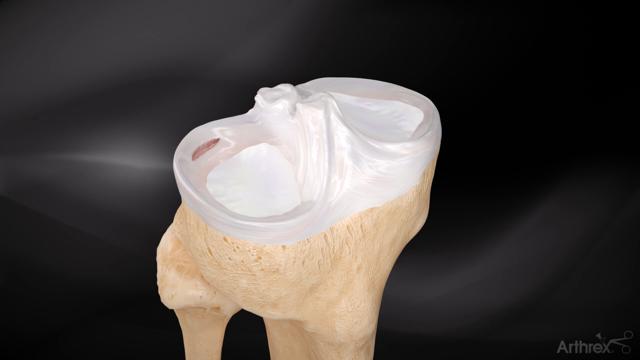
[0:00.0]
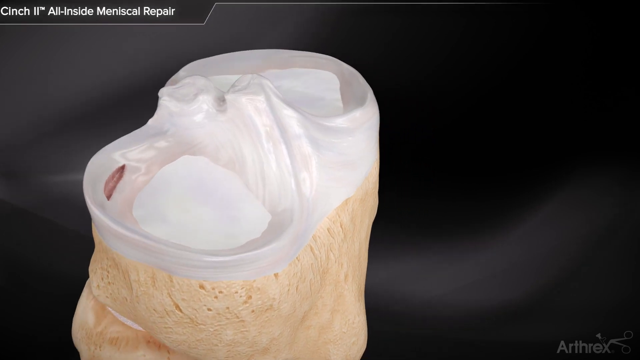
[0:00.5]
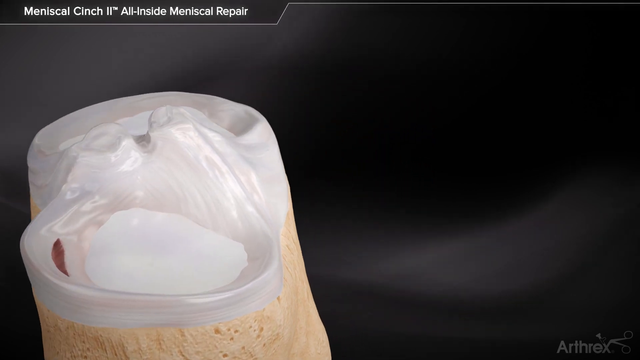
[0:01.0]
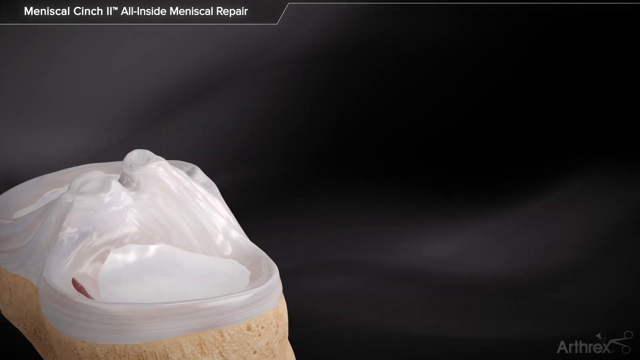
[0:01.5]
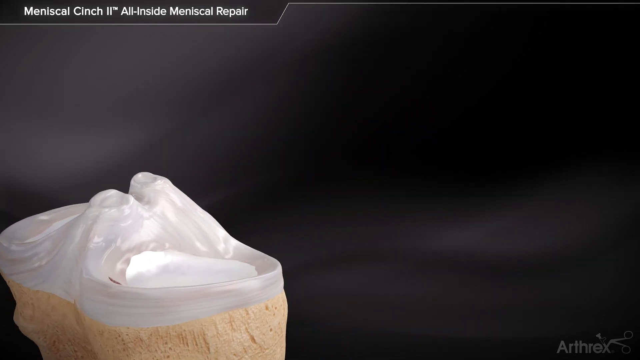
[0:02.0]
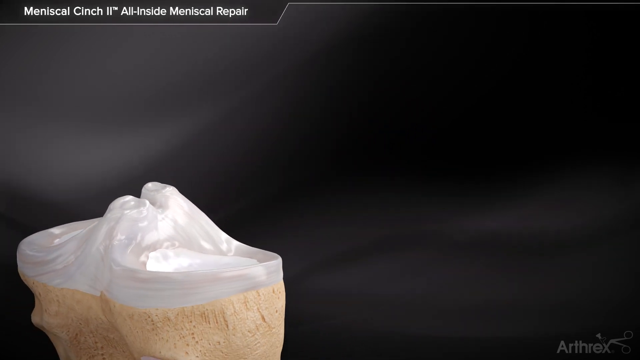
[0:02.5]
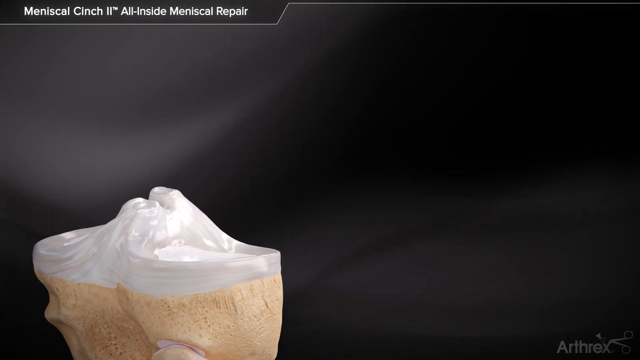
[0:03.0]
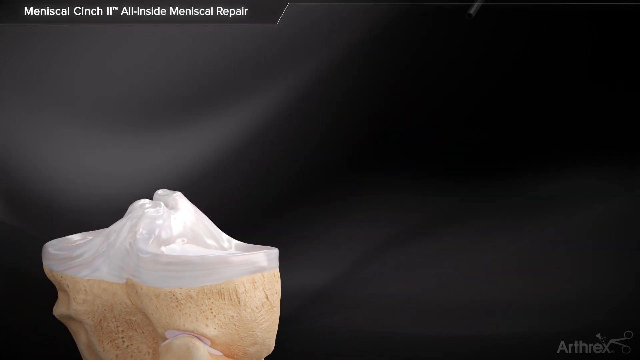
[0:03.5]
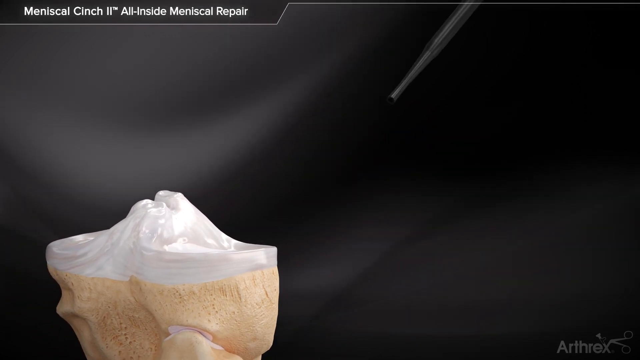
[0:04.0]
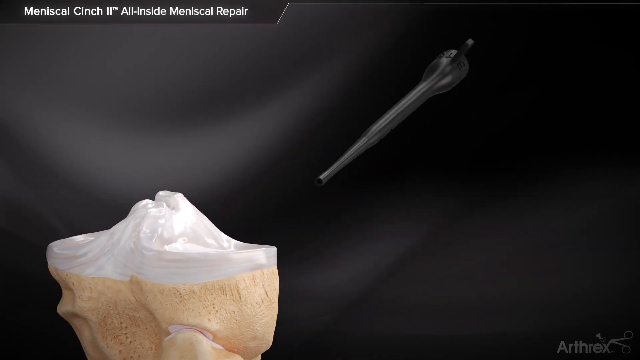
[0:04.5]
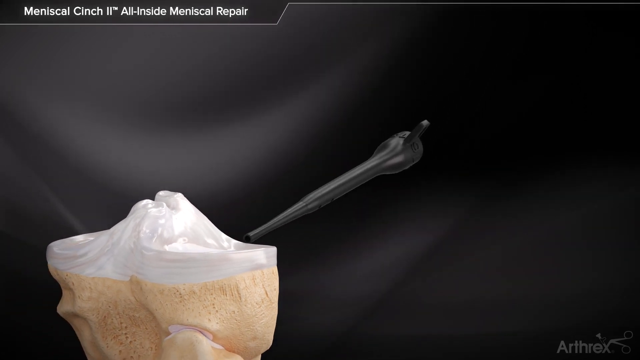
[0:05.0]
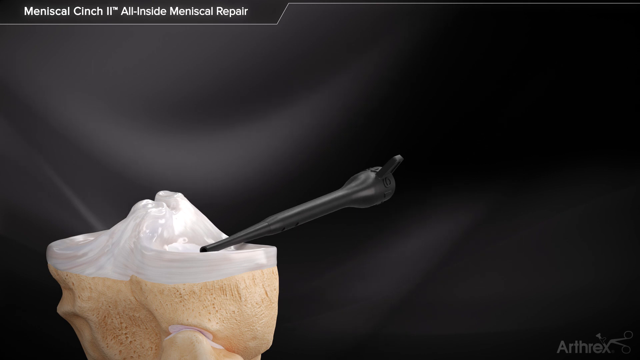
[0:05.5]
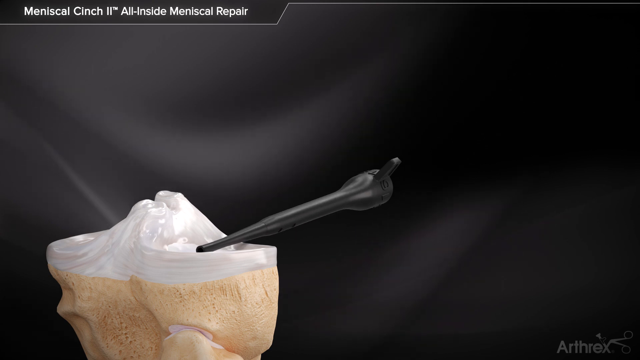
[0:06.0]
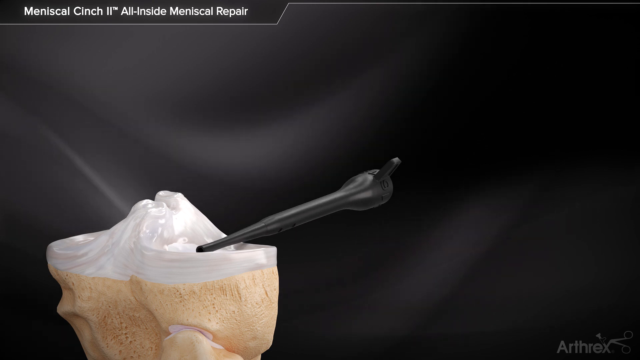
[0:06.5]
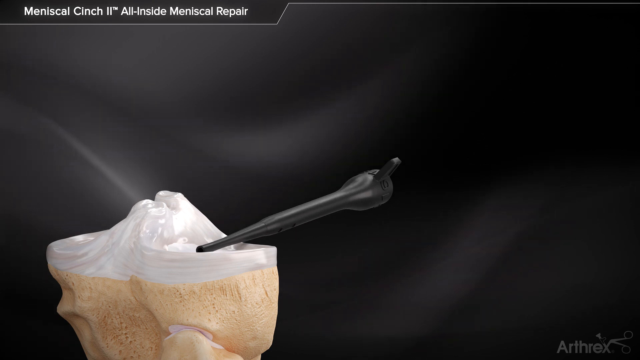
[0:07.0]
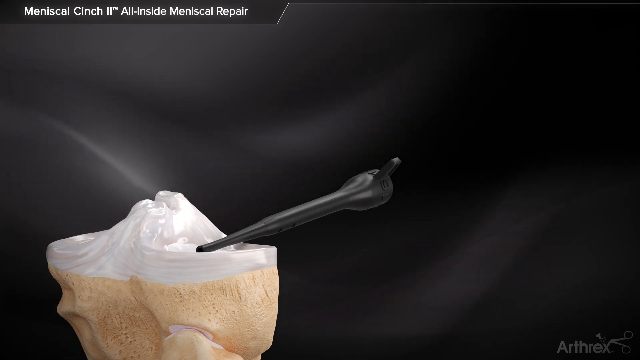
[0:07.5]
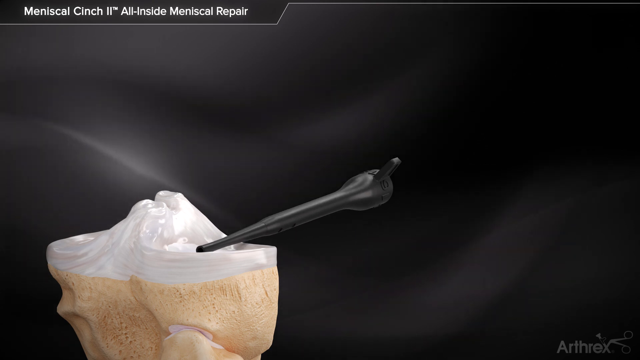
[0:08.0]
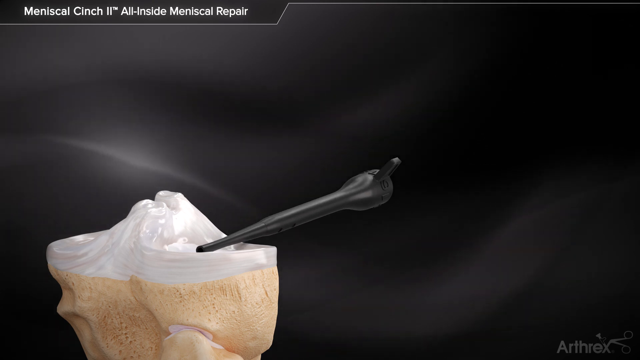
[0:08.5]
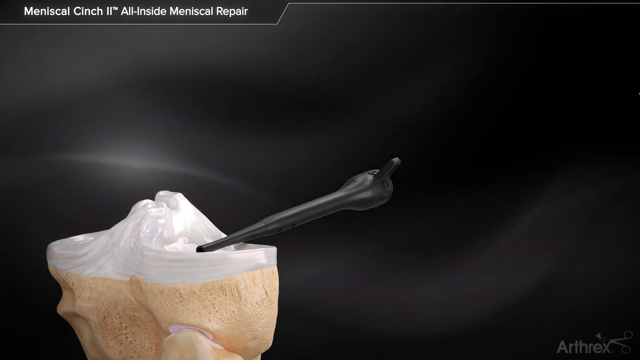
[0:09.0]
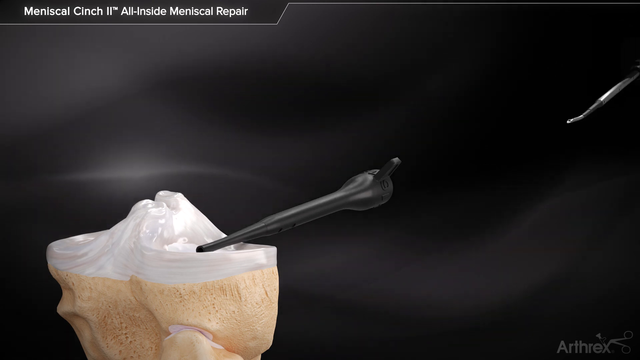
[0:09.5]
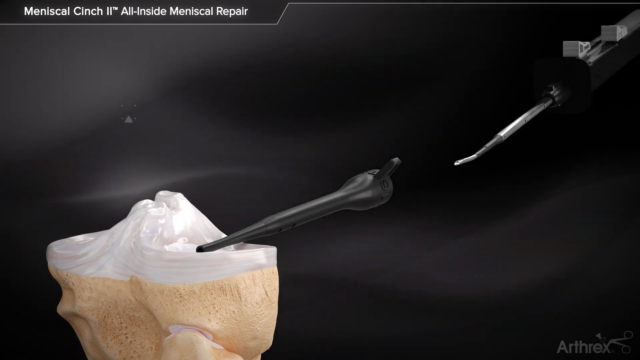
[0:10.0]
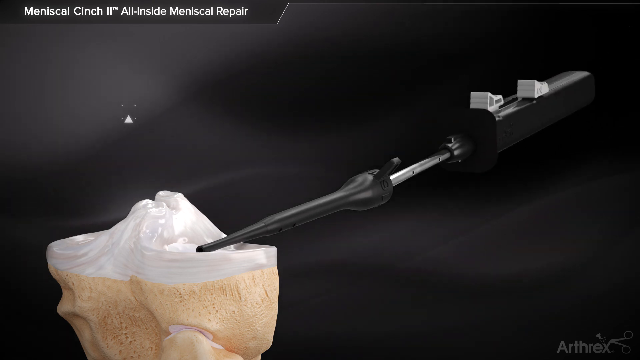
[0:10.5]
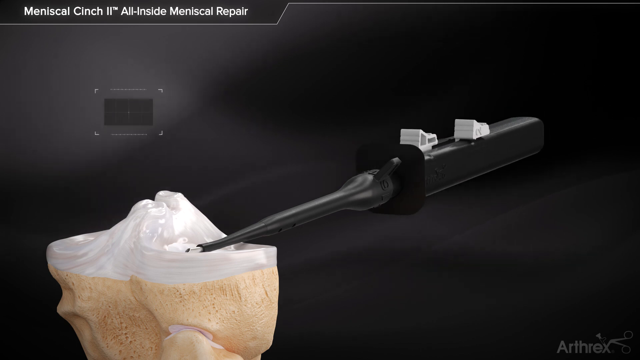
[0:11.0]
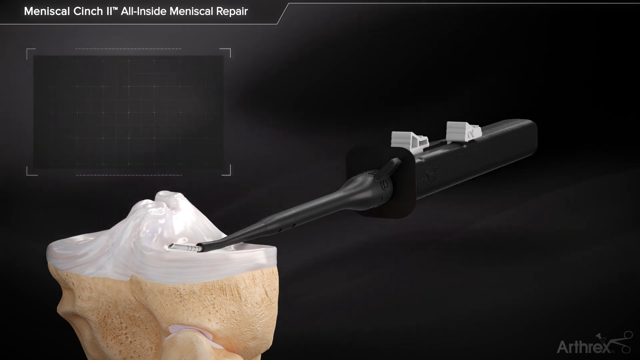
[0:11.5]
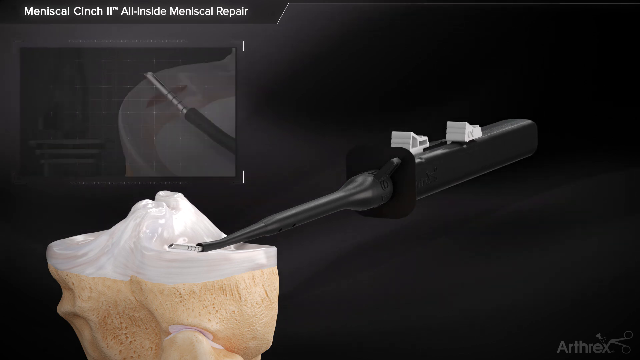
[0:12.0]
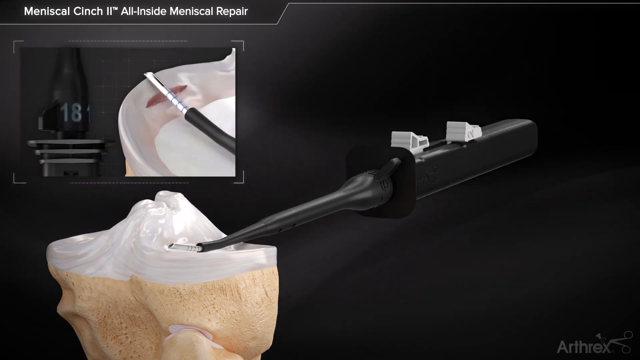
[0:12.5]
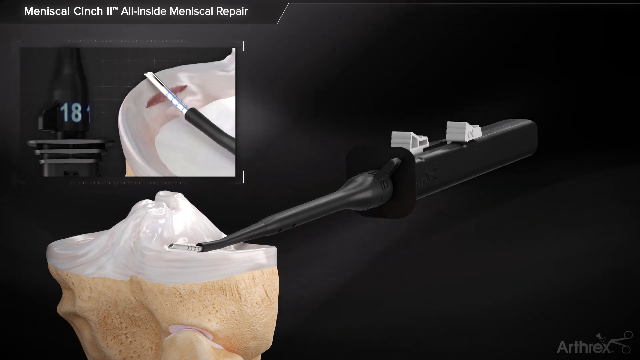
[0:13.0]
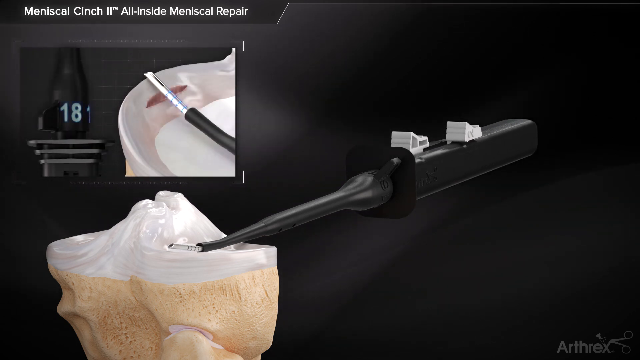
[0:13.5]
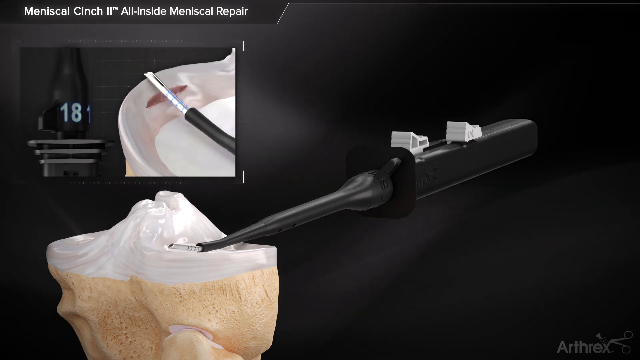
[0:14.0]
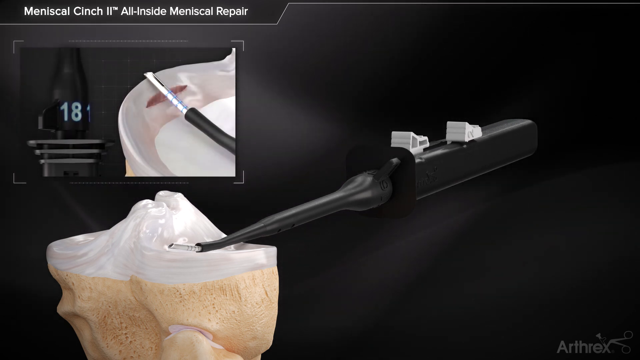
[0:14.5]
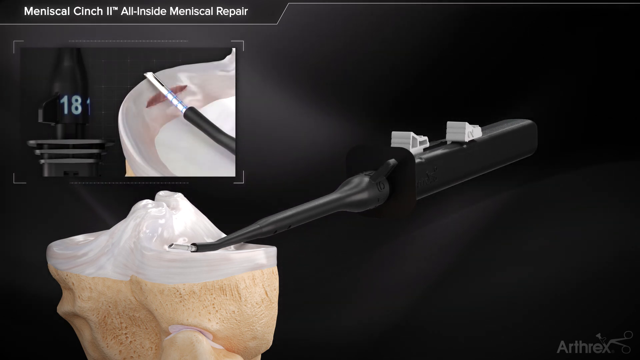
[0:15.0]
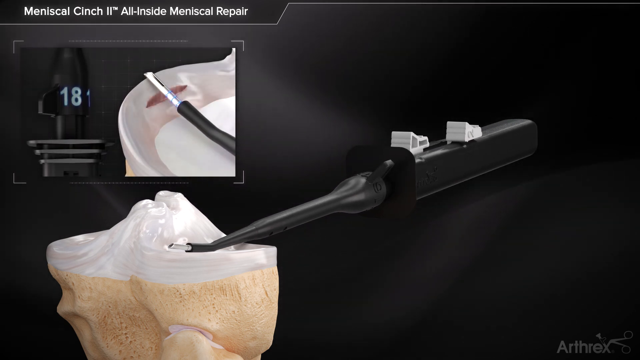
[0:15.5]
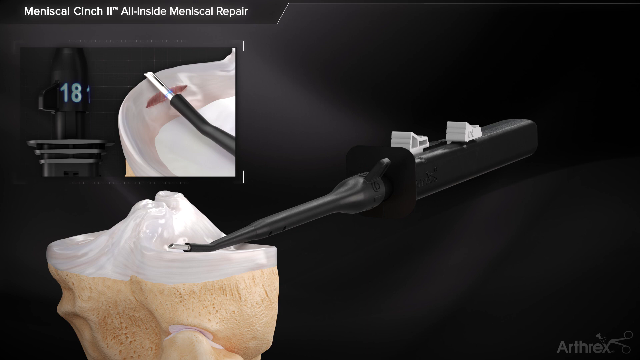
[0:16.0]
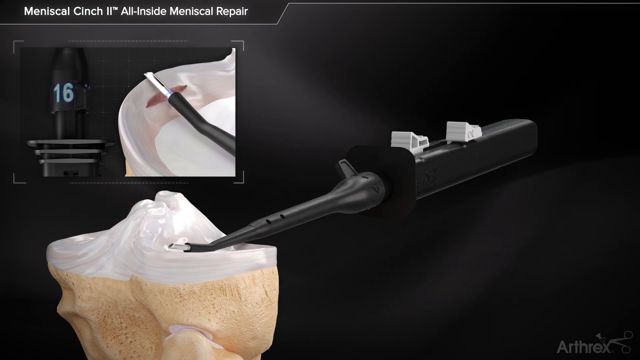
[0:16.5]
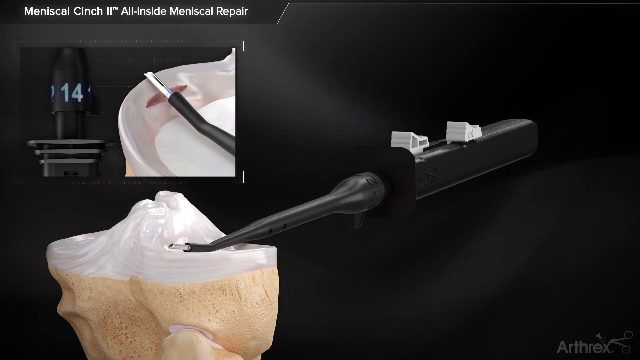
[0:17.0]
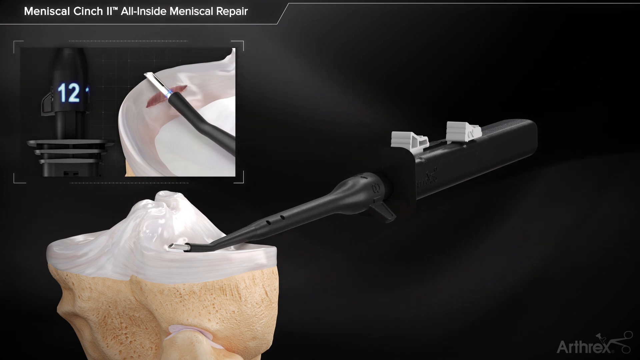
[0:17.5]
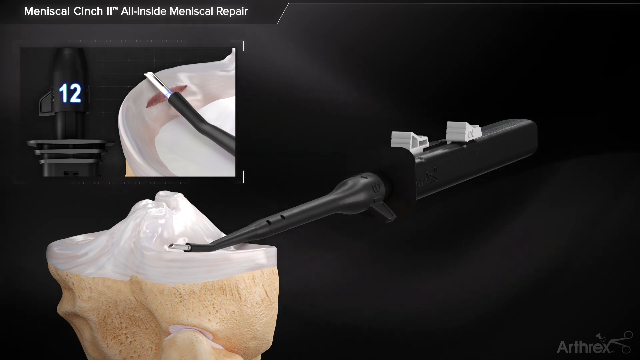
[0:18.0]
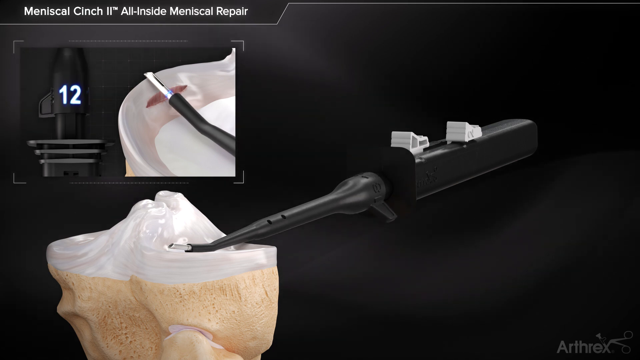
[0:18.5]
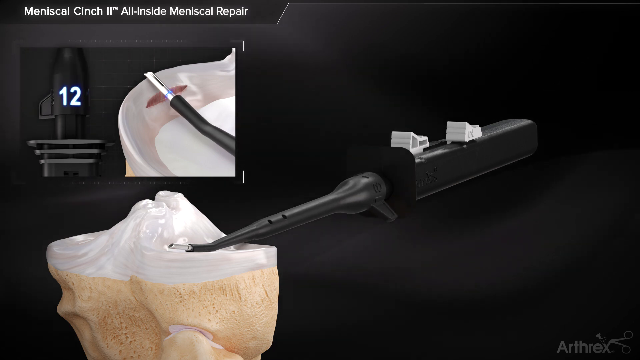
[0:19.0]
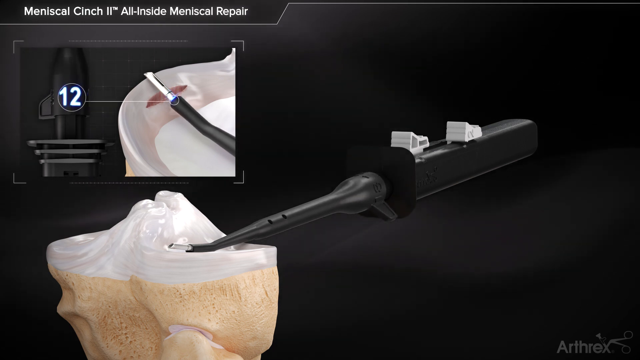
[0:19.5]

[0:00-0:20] Against a black background, an object sits in the middle of the frame. Its top has a white-colored shape, somewhat like a paste, and there are two giant crevices on its left and right sides. The bottom of the object looks very rough and textured, in a light brown color. As the scene changes, the object seems to turn around. Words pop up at the top left of the video reading "Meniscal Cinch 2 All Inside Meniscal Repair." An object then comes in from the top right and ends up on top of the right part of the object with the white cream, at the bottom left. This plastic object is placed on the top right of the object that needs repairing, and another object, this time seemingly metal, comes in from the top right and is inserted into the plastic object laid on top of the first object. A window opens at the top left. The number 18 appears on the black plastic object, and as it turns in a clockwise motion, more numbers appear until it lands on the number 12. Before the video ends, it also points to the object with the metal portion on it.